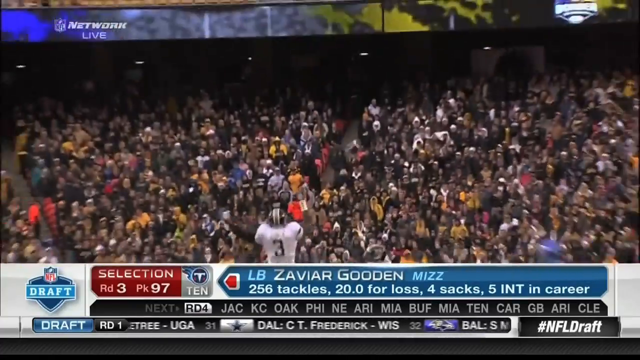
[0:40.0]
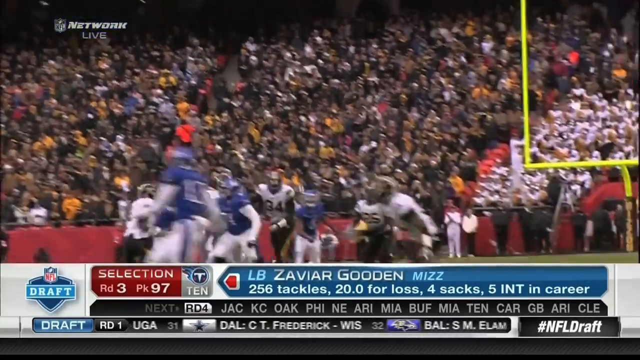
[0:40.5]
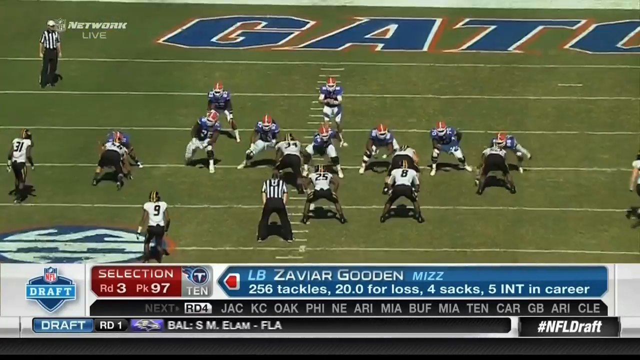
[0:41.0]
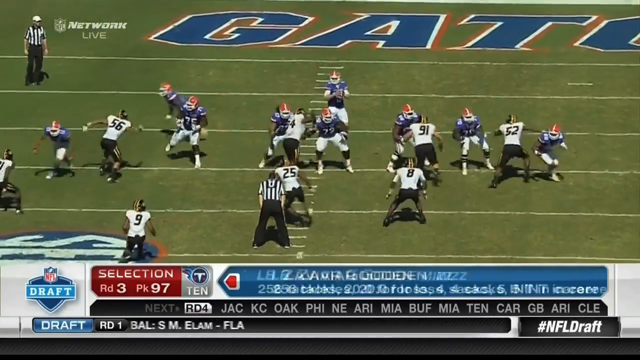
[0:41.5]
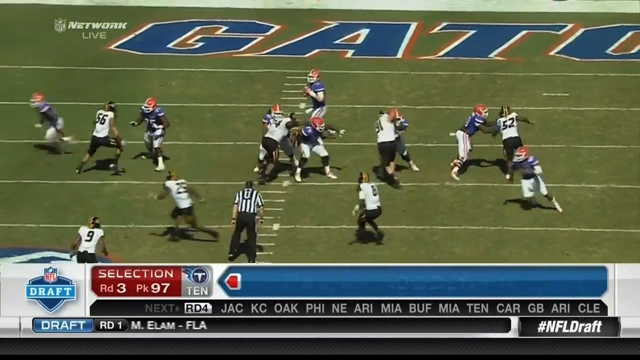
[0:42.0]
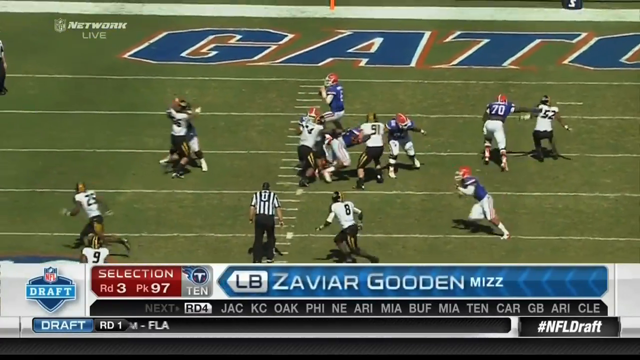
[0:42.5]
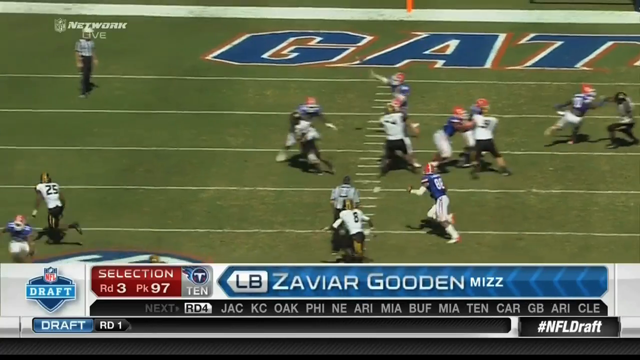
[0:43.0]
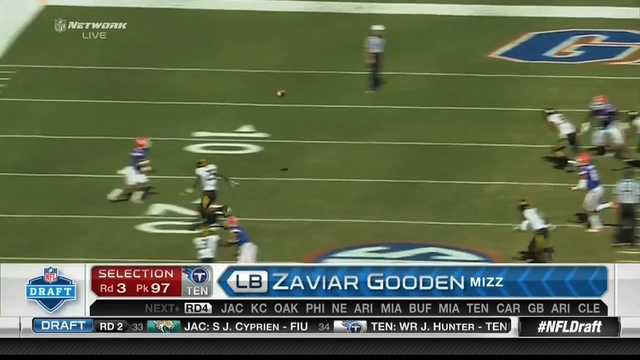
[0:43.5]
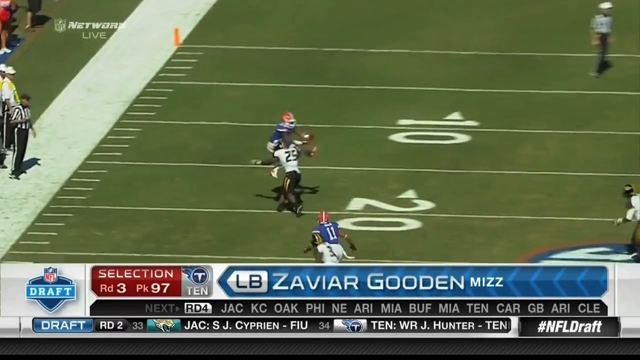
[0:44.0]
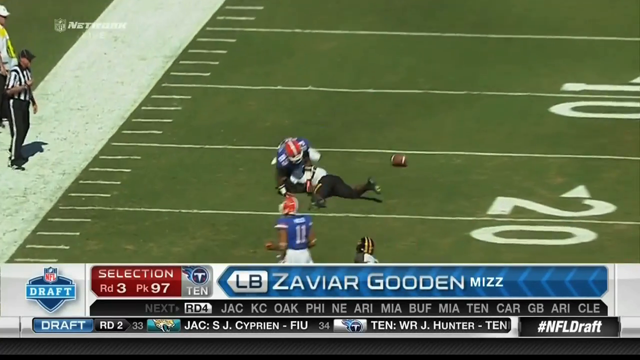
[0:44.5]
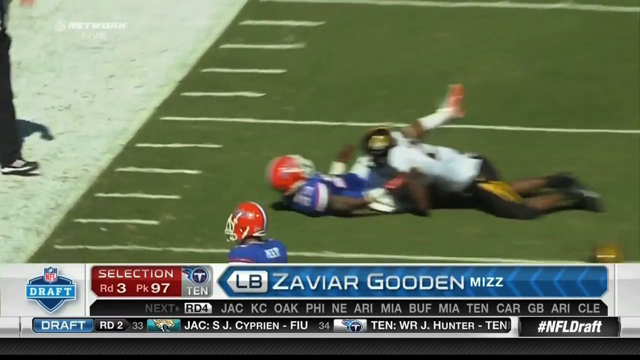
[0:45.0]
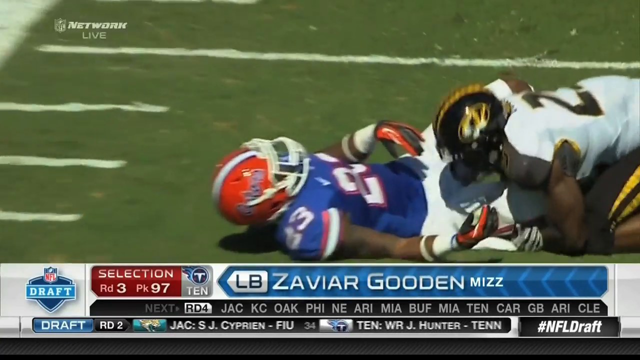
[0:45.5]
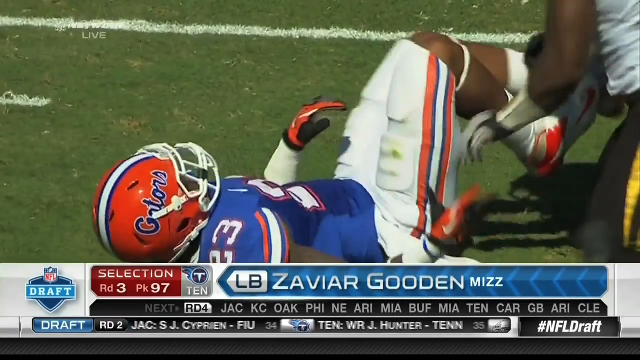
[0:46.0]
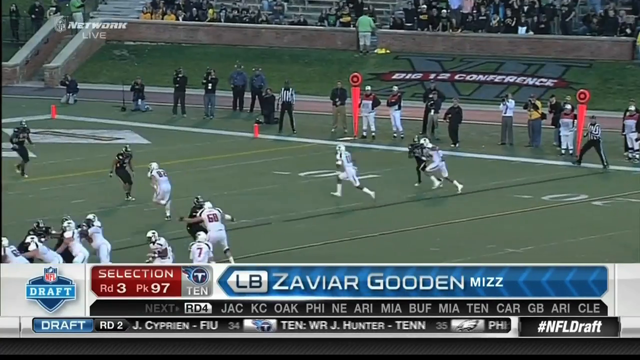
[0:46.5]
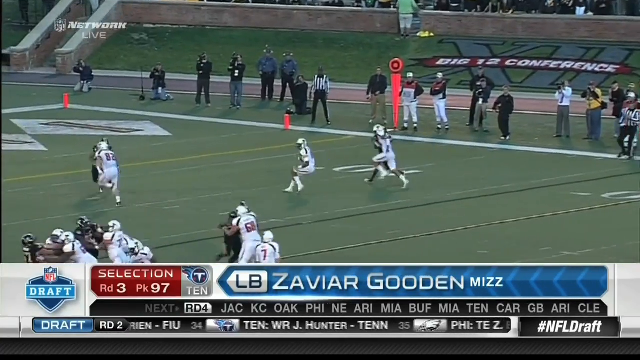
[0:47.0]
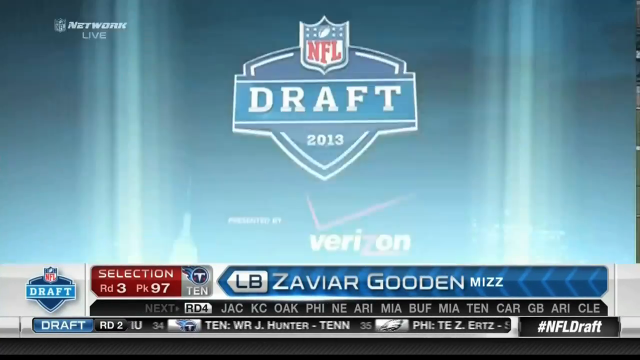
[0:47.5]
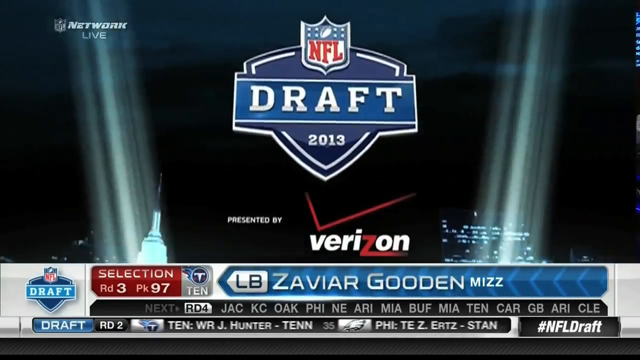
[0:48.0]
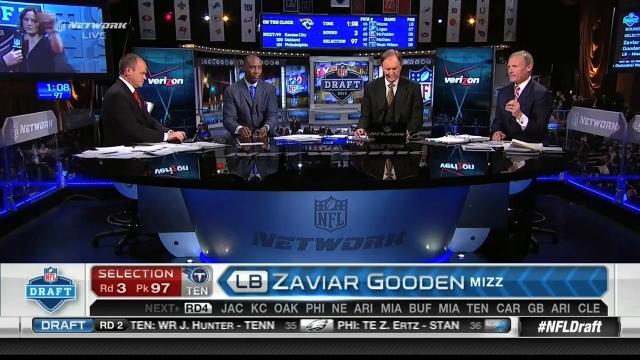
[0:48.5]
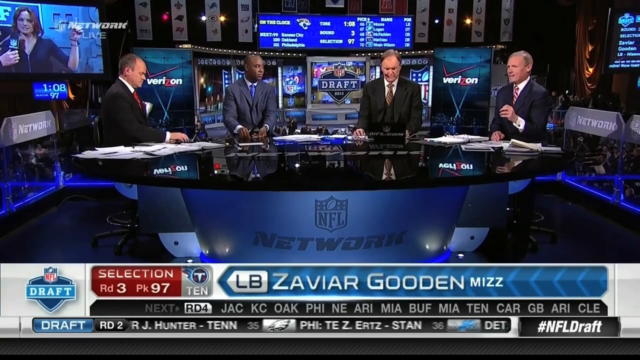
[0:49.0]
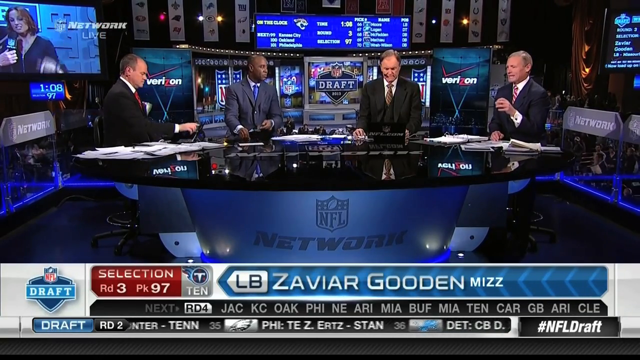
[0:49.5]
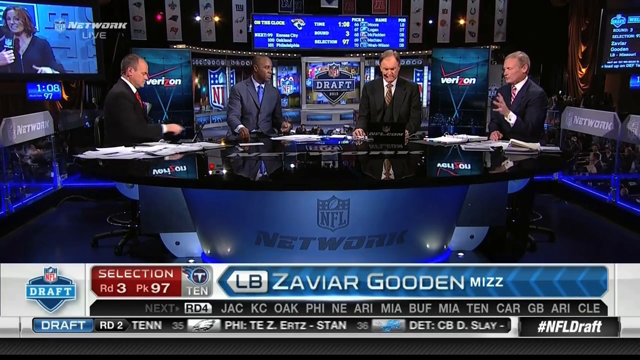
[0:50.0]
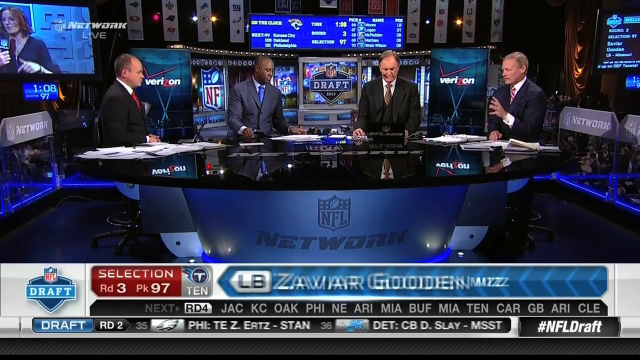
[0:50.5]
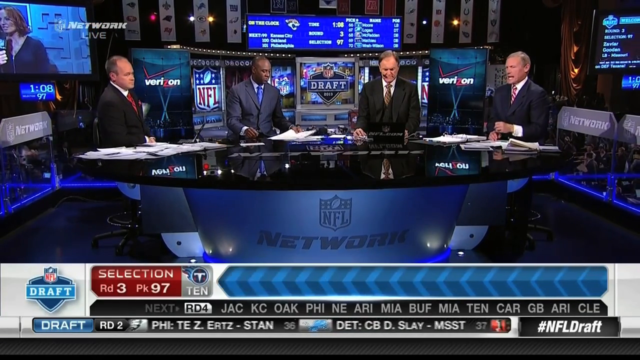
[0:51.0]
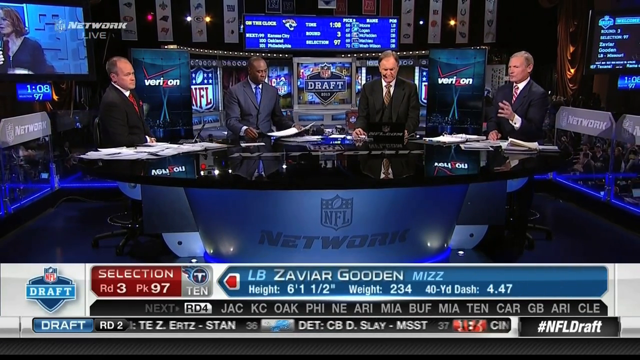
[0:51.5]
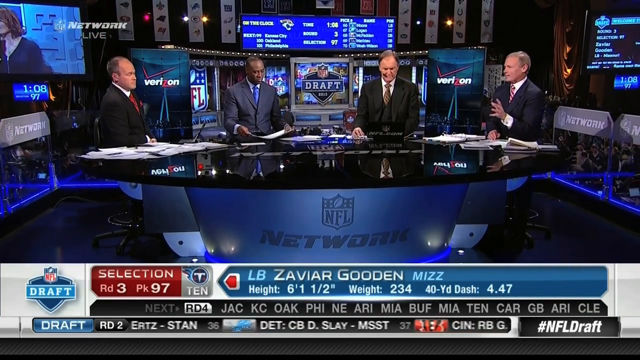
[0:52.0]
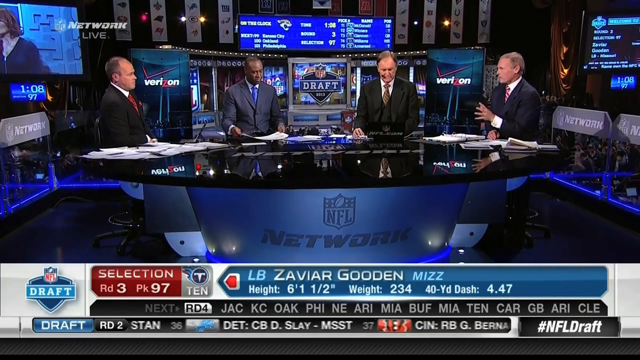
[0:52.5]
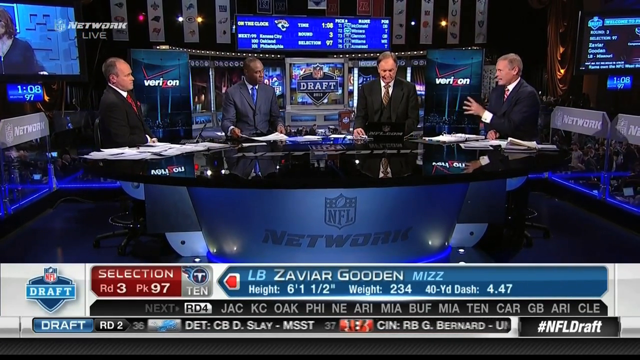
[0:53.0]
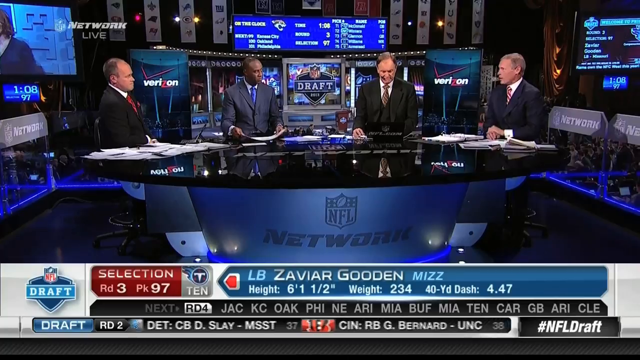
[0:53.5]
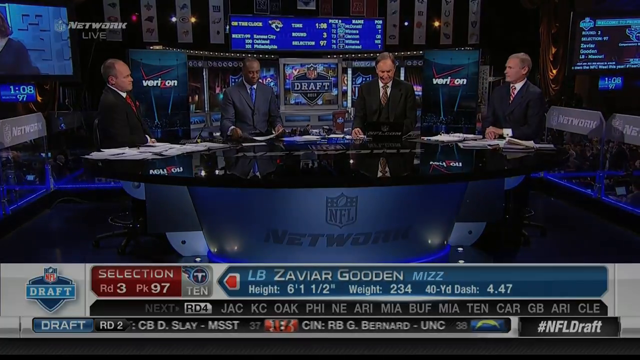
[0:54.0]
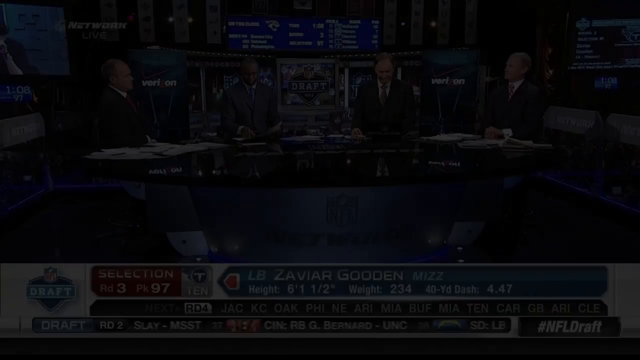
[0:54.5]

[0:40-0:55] A stadium full of spectators is shown, then the view moves to a football game. Meanwhile, NFL draft information runs in captions across the bottom of the screen, reading "linebacker Xavier Gooden." A picture of a player being tackled appears, followed by logo information for the 2013 NFL Draft. Next is a football field for the Gators, with some players in black and white shirts and others in navy blue shirts with orange trim. The players wear orange helmets with white stripes that say "Gator" on the side. The scene then moves to commentators at ESPN sitting at a desk.